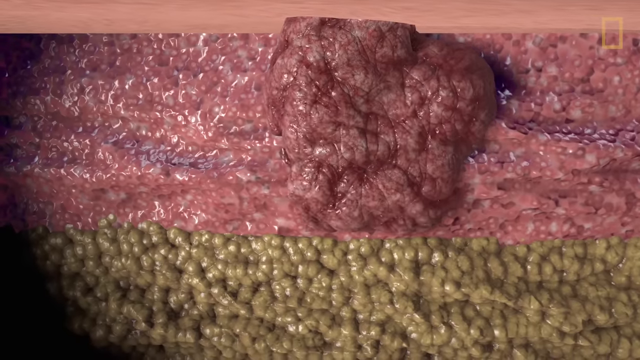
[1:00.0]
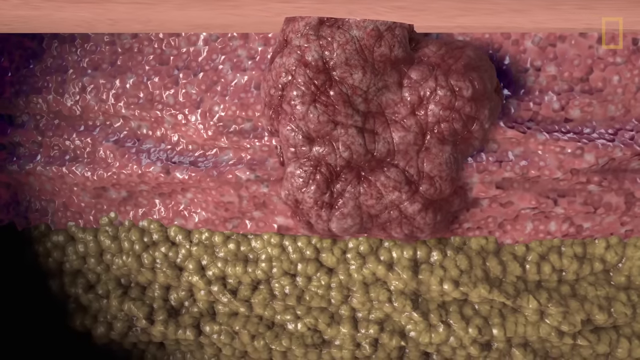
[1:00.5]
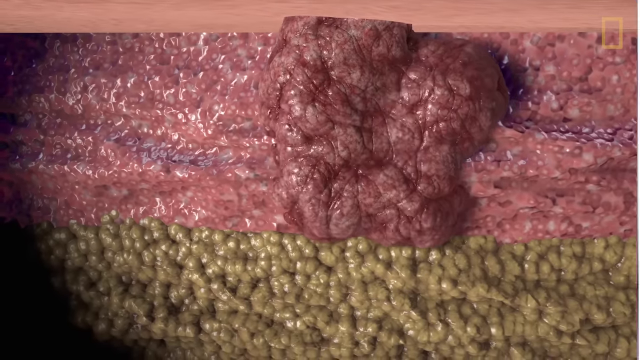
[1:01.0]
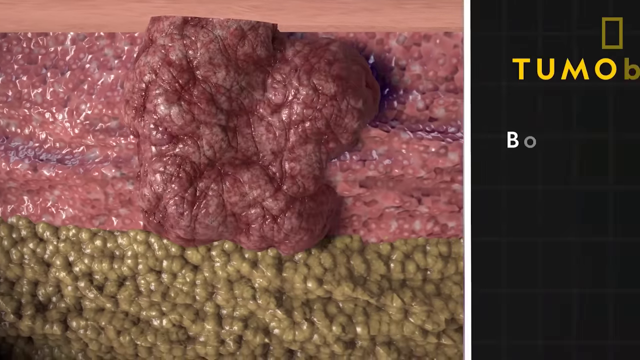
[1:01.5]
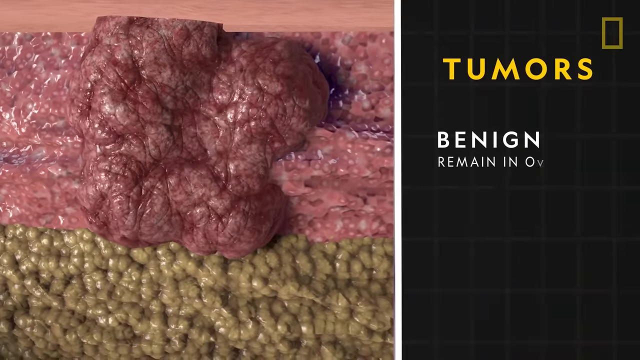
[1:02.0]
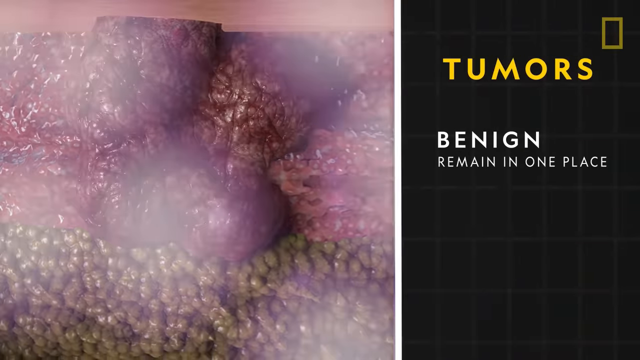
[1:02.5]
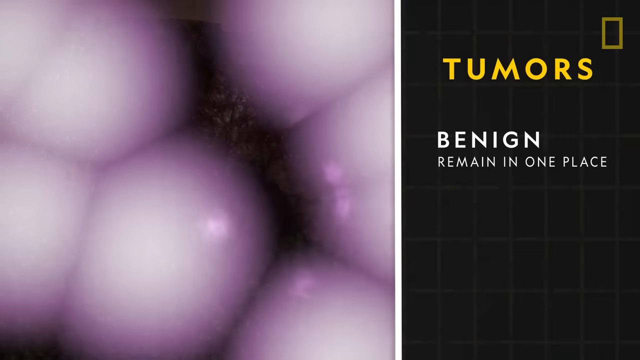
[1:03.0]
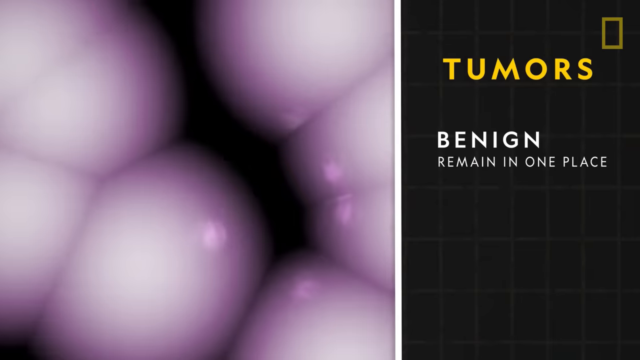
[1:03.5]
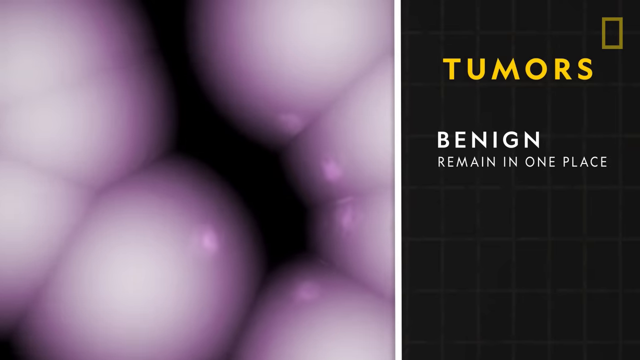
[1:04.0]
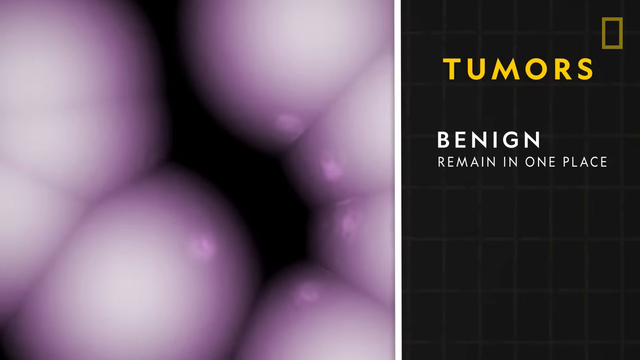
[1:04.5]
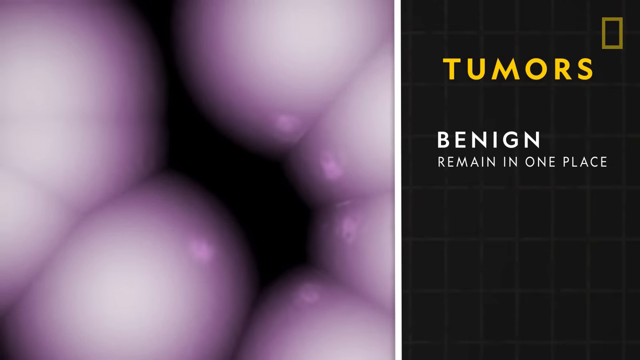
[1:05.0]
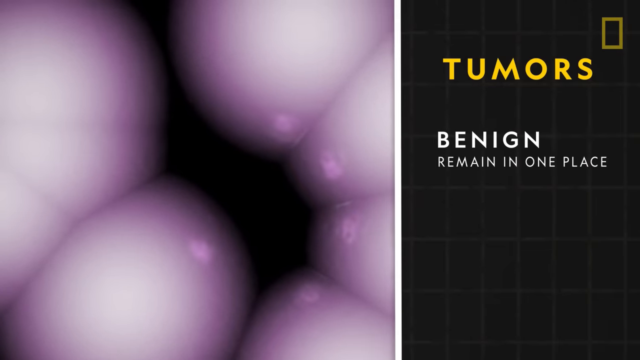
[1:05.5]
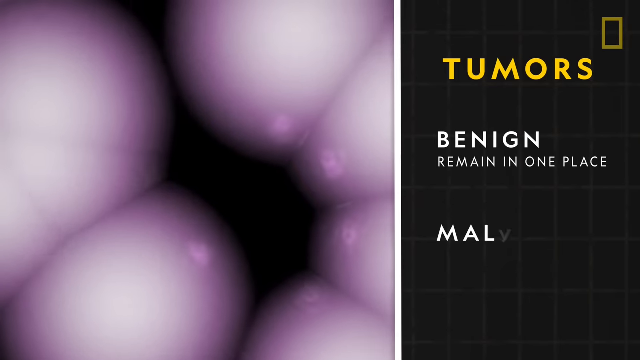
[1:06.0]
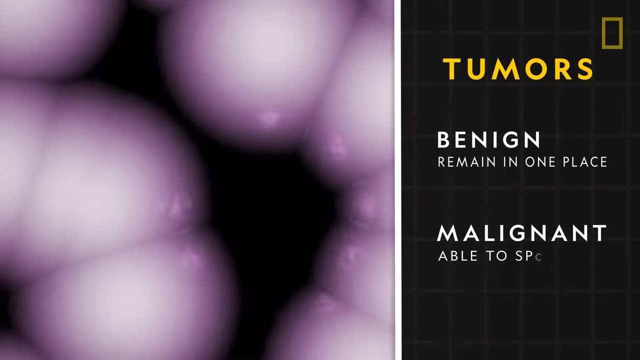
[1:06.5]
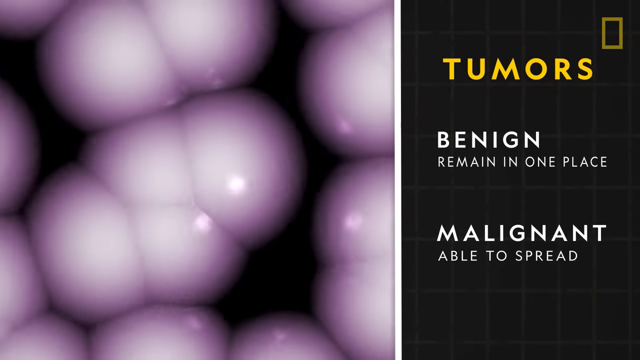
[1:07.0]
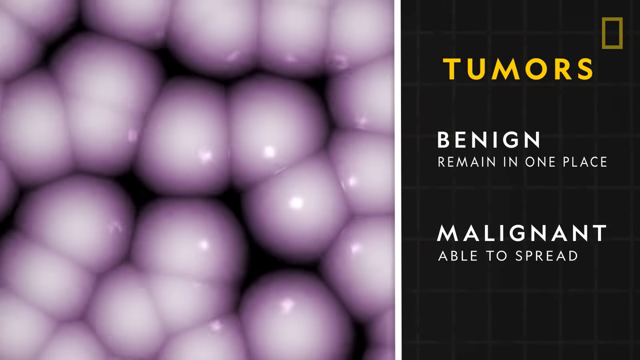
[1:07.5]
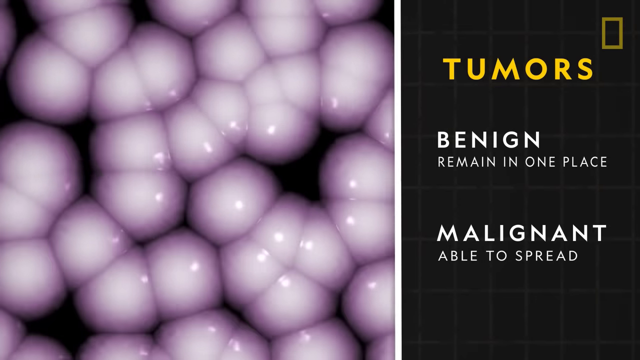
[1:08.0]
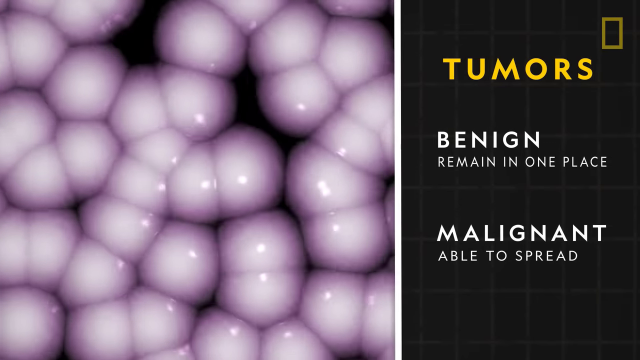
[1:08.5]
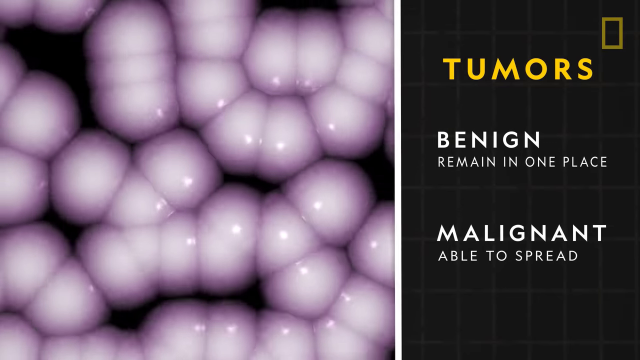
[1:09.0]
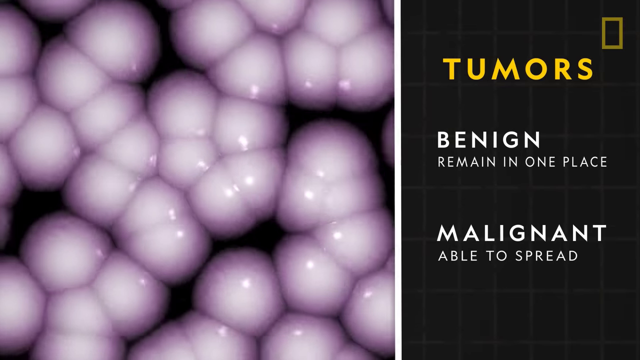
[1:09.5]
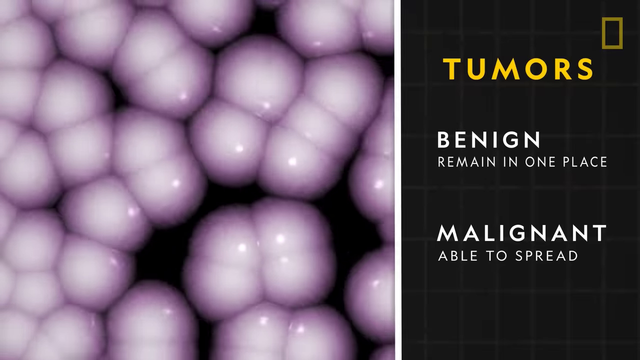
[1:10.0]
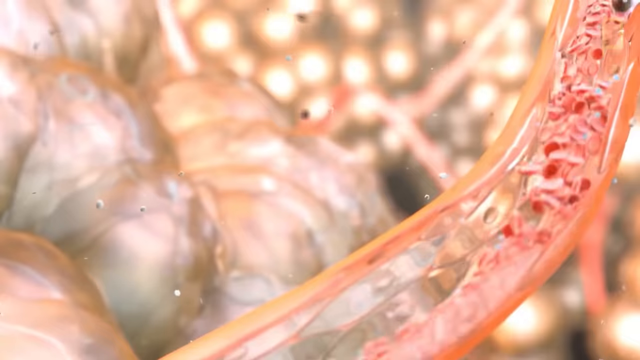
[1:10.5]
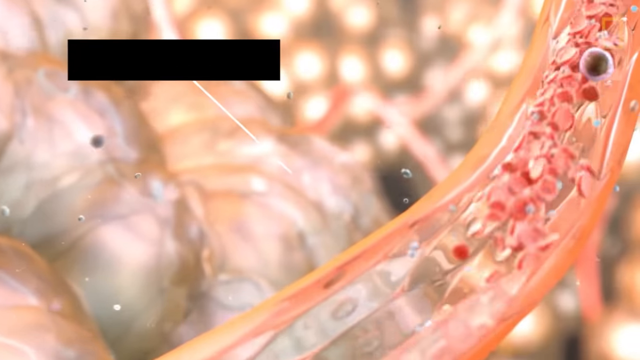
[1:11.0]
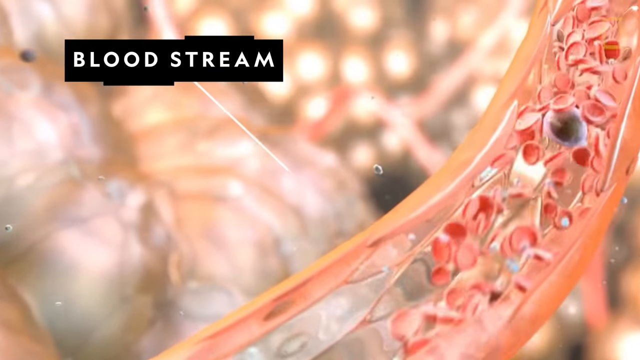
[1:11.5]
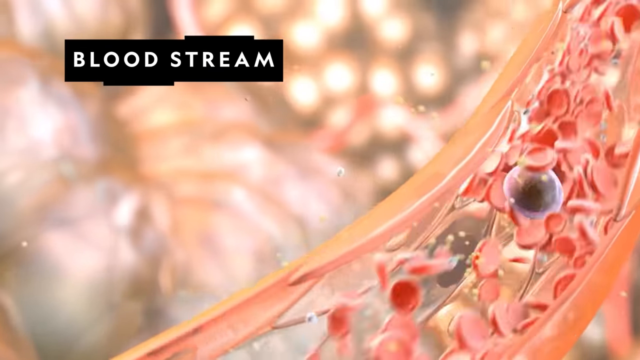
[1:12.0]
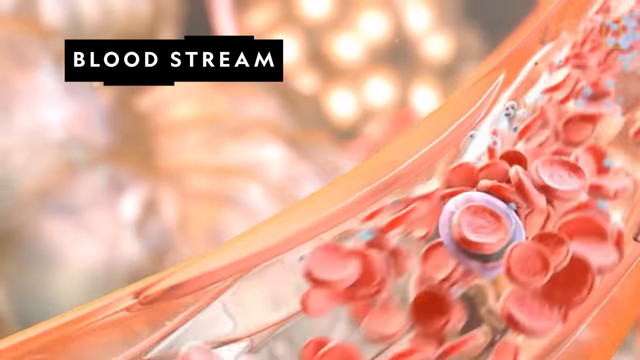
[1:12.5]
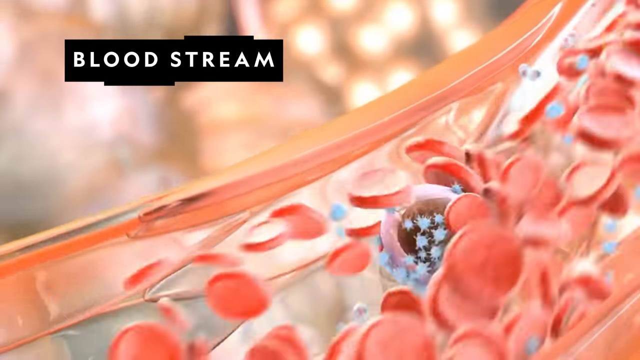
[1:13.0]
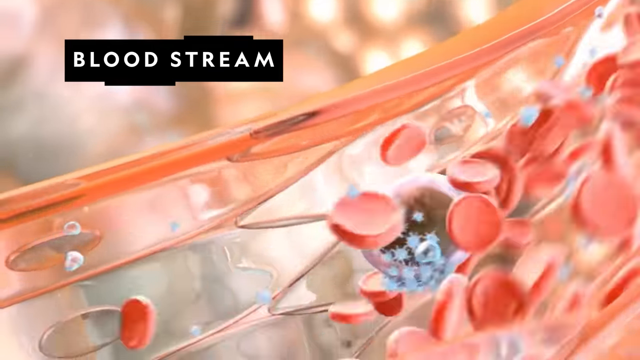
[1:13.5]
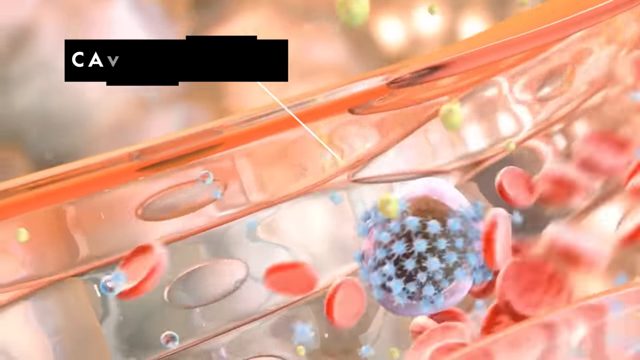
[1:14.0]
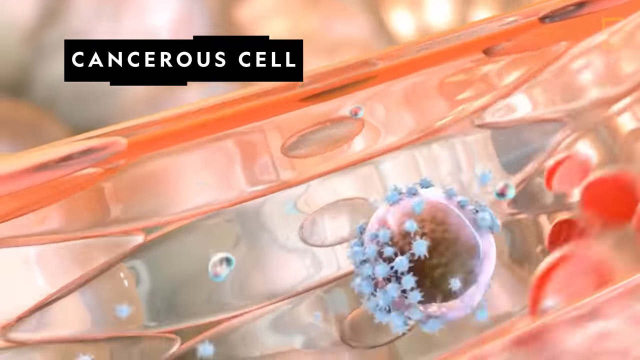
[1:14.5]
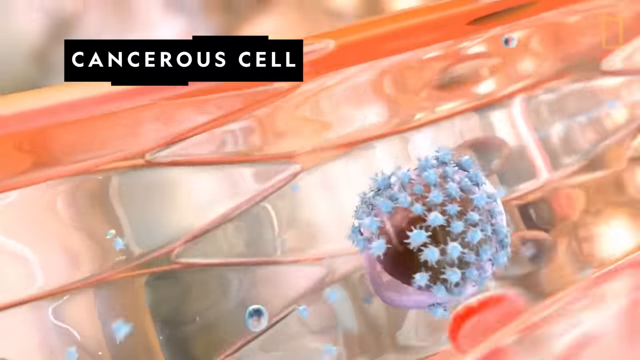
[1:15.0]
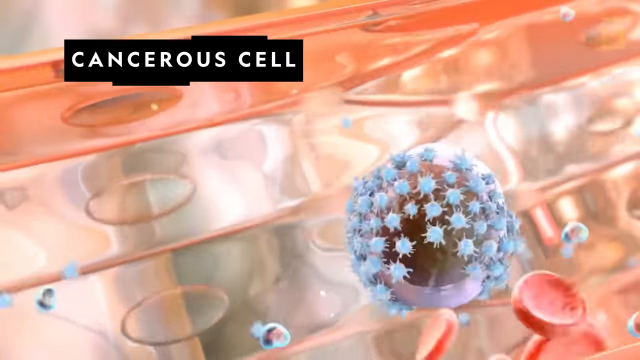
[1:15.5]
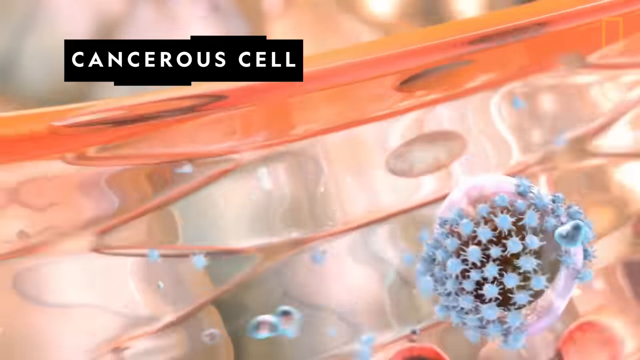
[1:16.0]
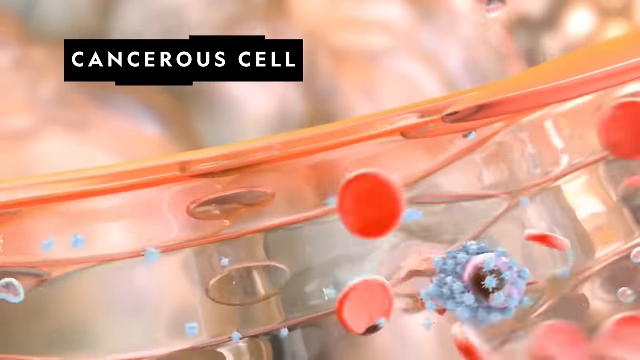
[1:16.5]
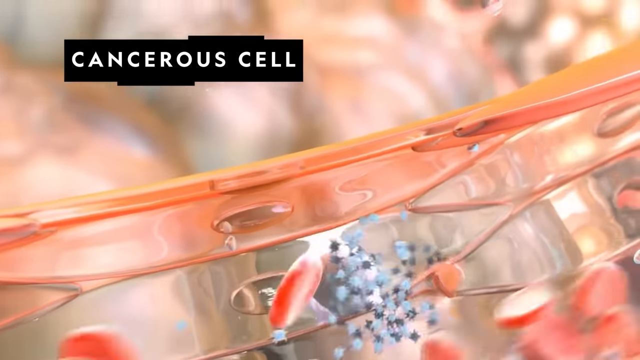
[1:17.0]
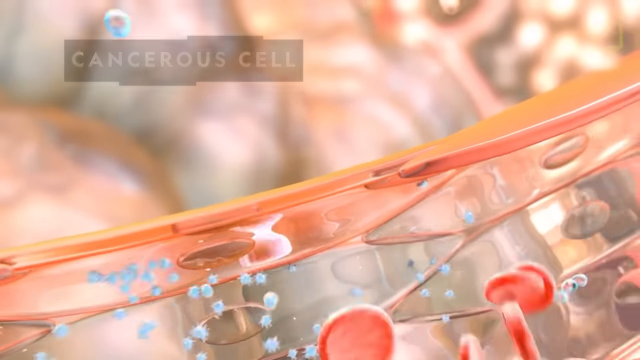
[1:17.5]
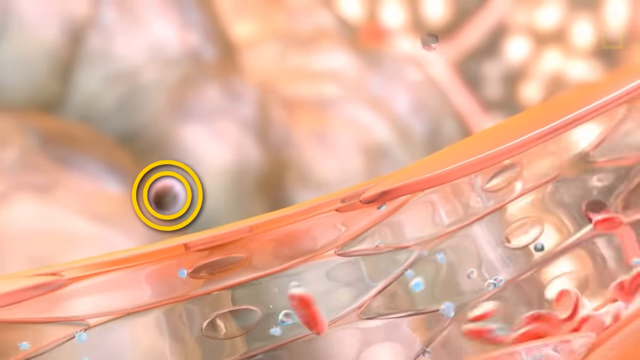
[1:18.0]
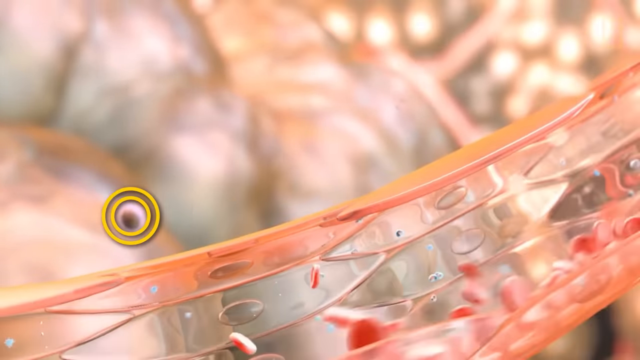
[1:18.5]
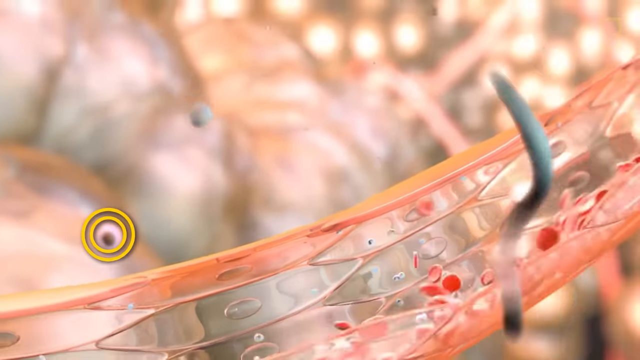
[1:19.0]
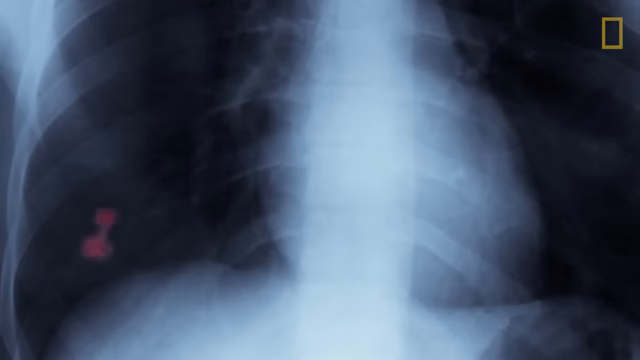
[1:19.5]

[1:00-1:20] A graphic is on the left side and a text box on the right. The graphic is a shifting, moving cluster of white orbs, or bubbles, moving around in clusters. The text box has a black background and the title "tumors"; below it the text reads "benign," then "remain in one place," then "malignant," then "able to spread." The scene shifts to another computer-generated graphic of an artery with boundaries and lots of blood cells moving in it, labeled "bloodstream." Within it is a bubble with light blue, spidery-looking objects clamped on, labeled "cancerous cell." The cell moves through the artery or vein, pops out of the bloodstream passageway, and is circled with two yellow borders.